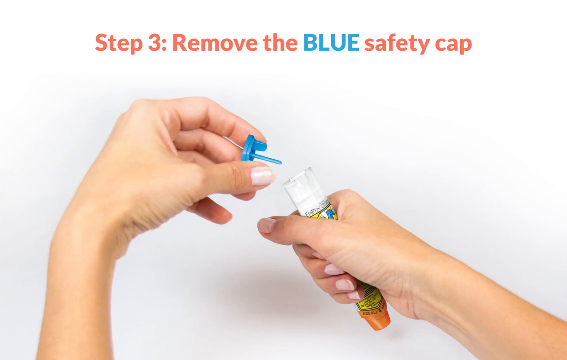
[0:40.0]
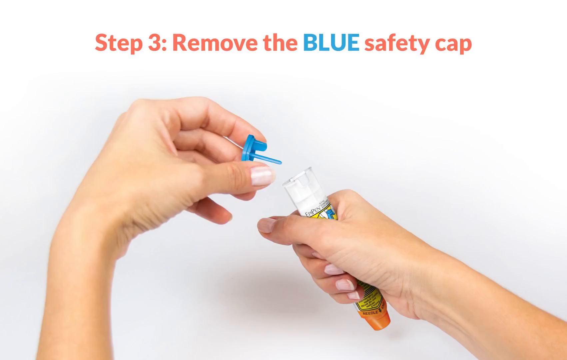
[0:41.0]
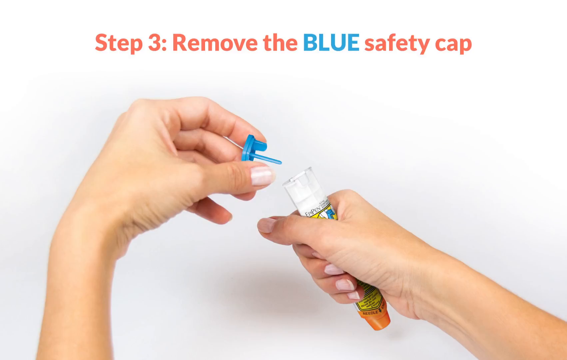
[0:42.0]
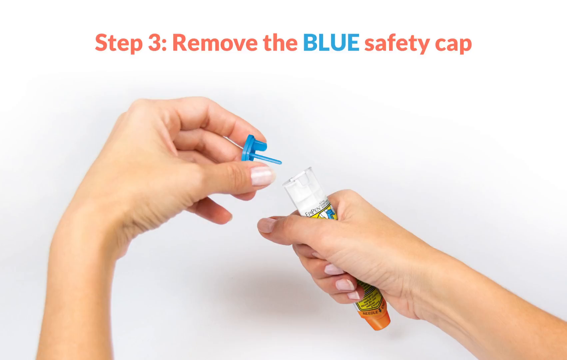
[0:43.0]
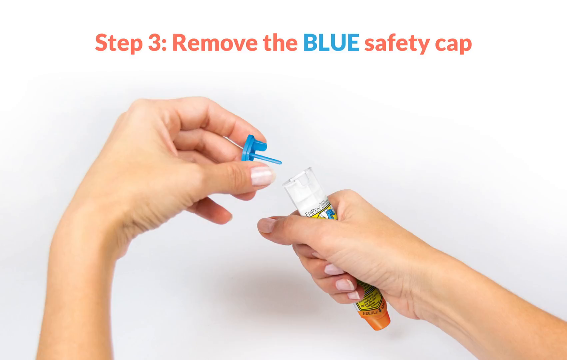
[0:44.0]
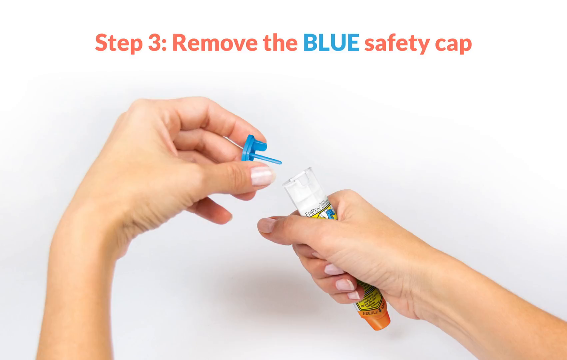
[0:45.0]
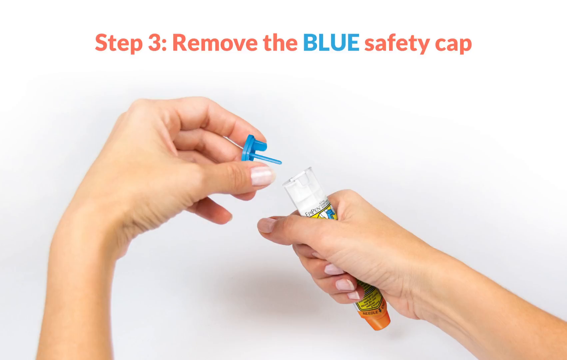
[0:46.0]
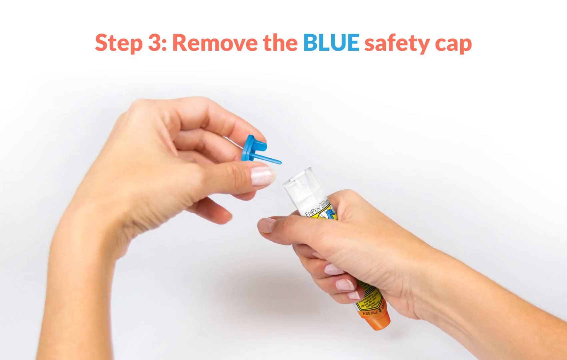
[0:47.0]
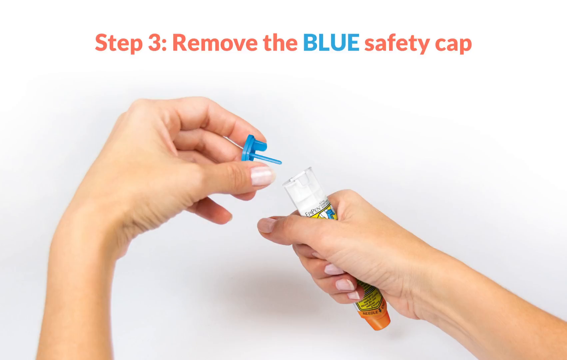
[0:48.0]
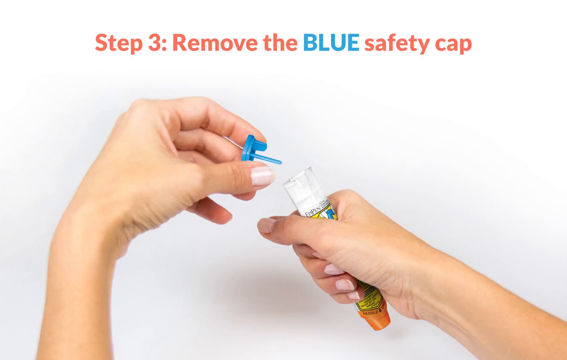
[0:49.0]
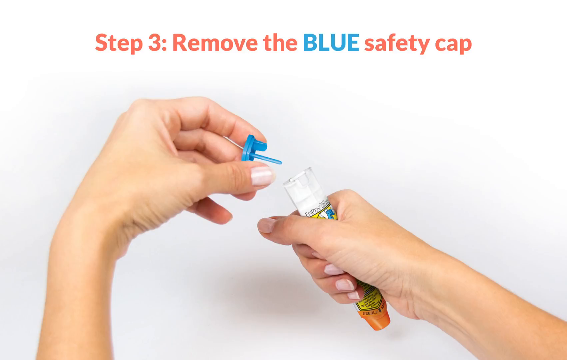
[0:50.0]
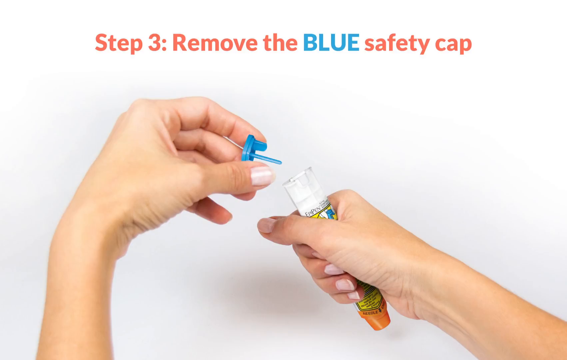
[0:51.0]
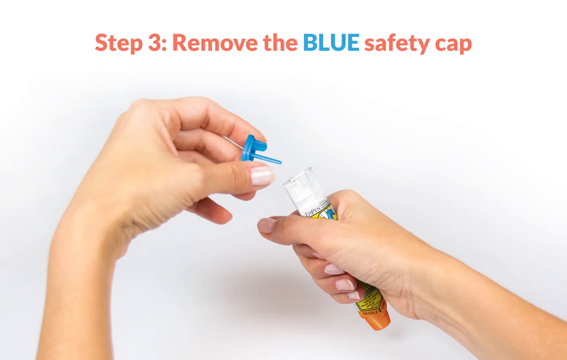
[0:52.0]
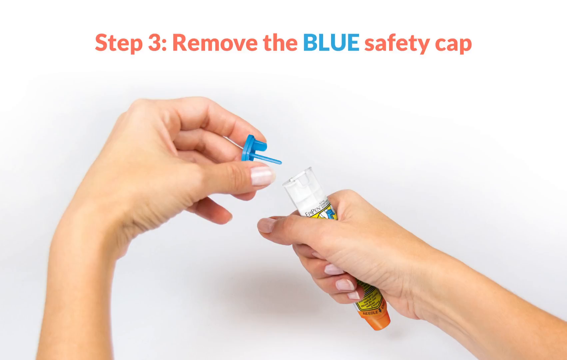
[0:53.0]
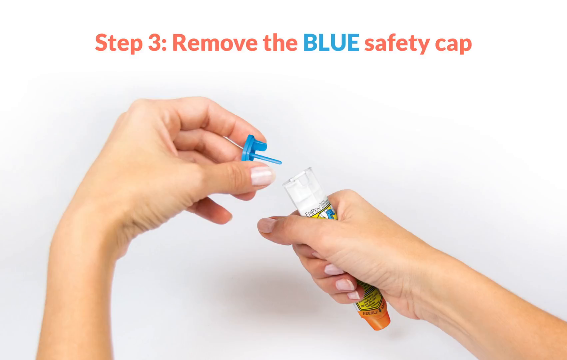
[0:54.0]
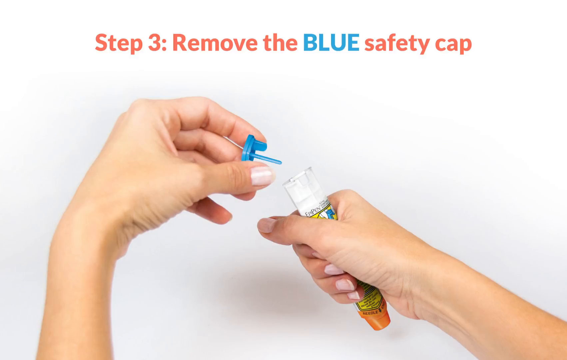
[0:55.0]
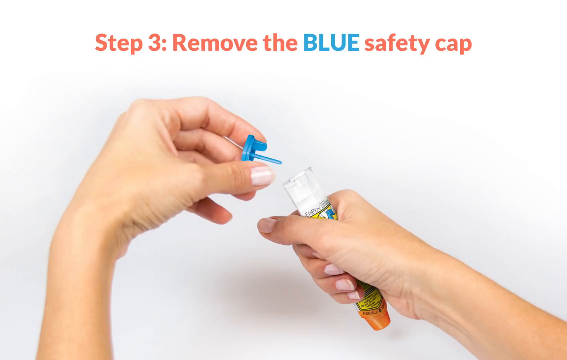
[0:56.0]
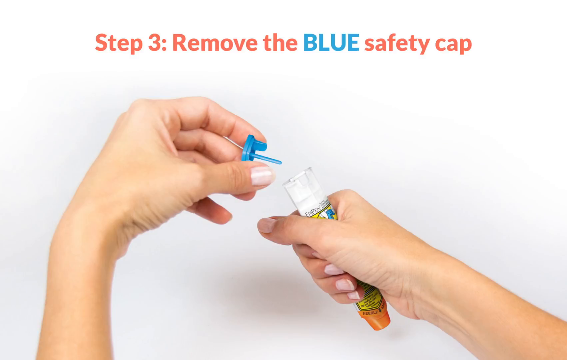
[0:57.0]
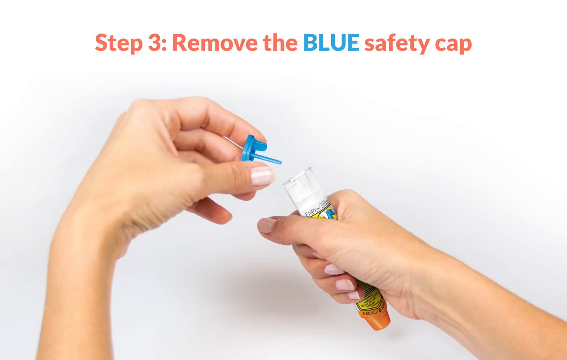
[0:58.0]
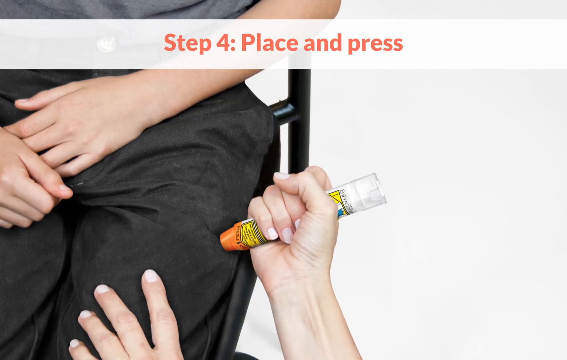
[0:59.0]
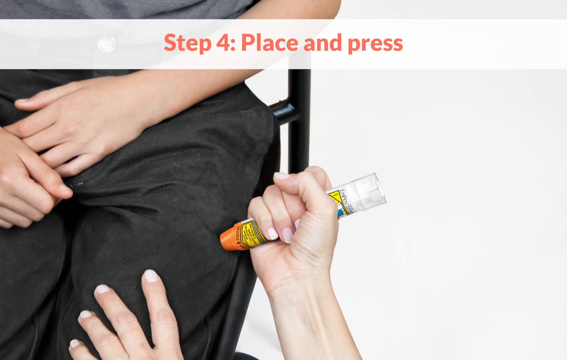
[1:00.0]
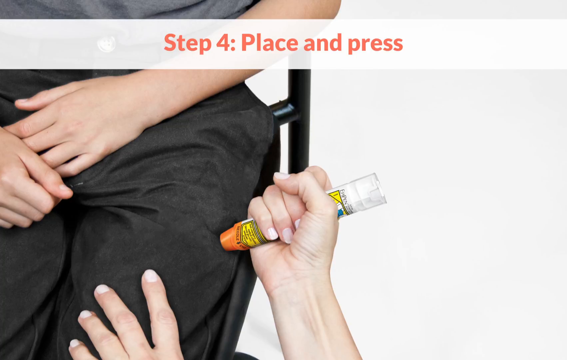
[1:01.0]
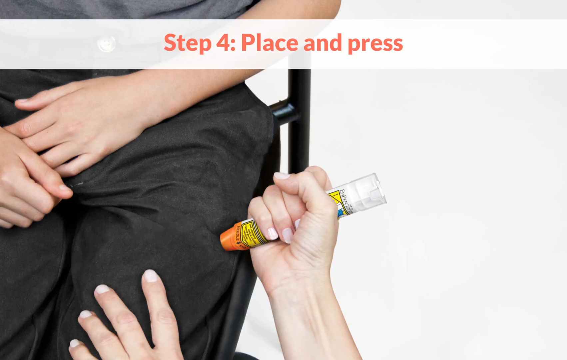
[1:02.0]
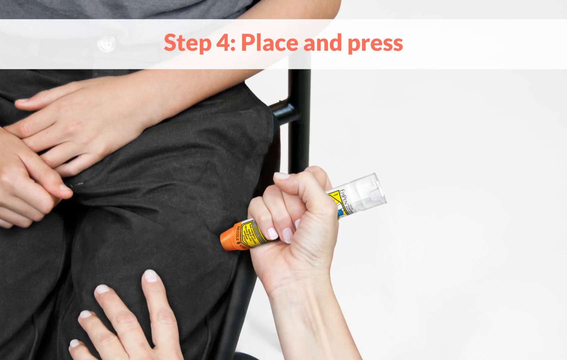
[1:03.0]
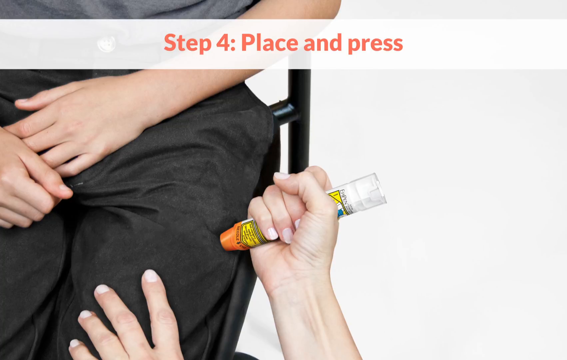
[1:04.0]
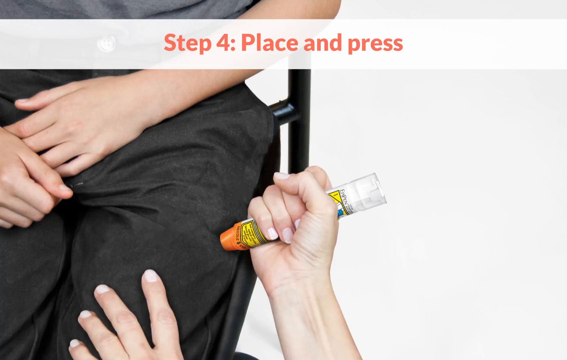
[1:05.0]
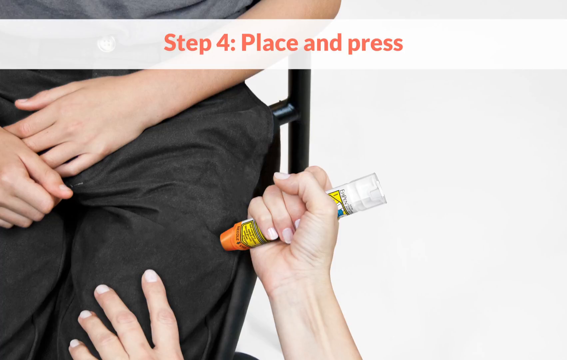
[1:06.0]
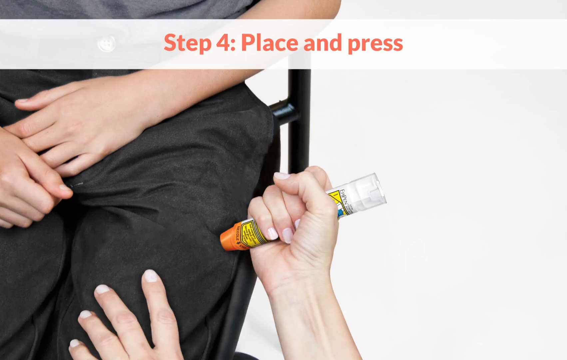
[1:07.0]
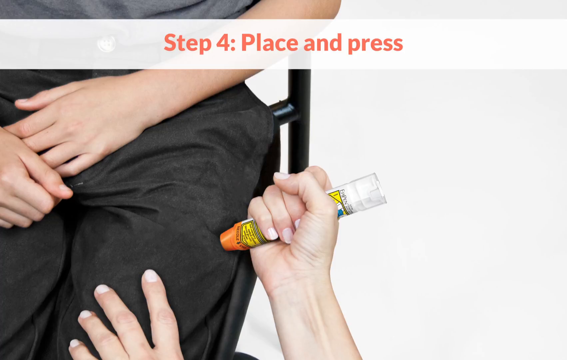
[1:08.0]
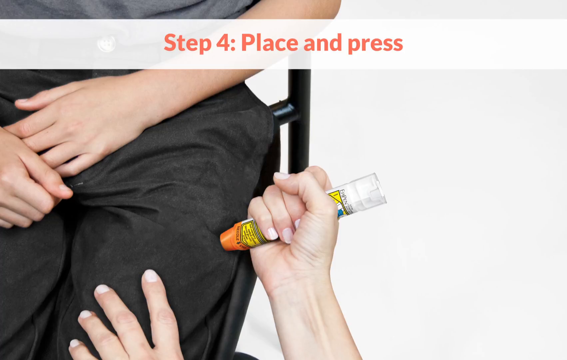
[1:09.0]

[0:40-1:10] Step three, "remove the blue safety cap," is on screen, with the word "BLUE" in the heading in all caps and blue font. The EpiPen is held in two hands: the right hand holds the bulk of the pen in a fist with the thumb outward, and the left hand removes the blue cap by grasping it between the first two fingers and the thumb, revealing the prongs of the blue cap that held it in the device. It is a still shot with no movement. The video stays on this slide for an extended time before moving to step four, "place and press." Its picture shows two individuals for the first time, though only partly: one person's lap and hands and a second person's hand. The first person is seated in a black metal chair with their hands calmly folded in their lap. The second person holds the EpiPen in their right fist, thumb outward, with the orange cap placed into the seated person's thigh, forming a slight indentation, while the injector's left hand holds the seated person's knee. It is again a still image, but the pen appears to be pressed against the leg with a fair amount of pressure.